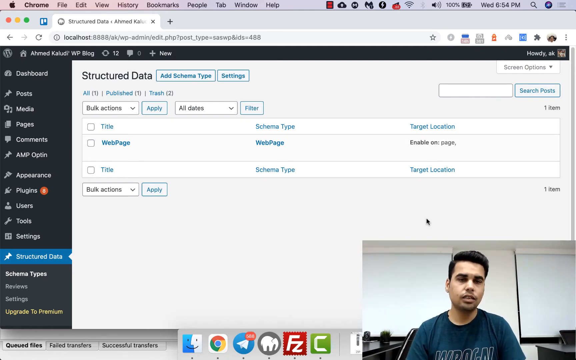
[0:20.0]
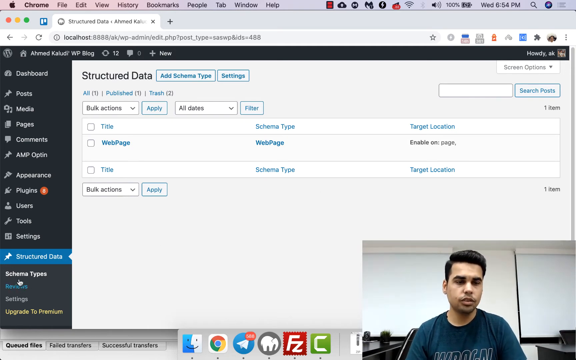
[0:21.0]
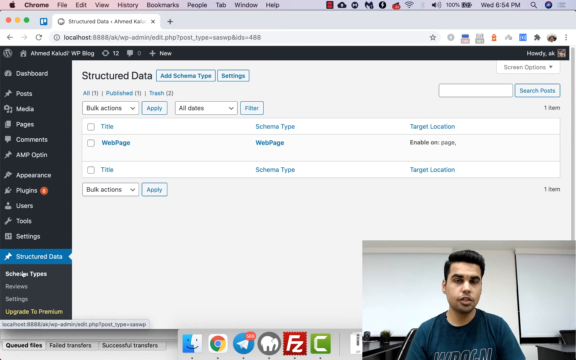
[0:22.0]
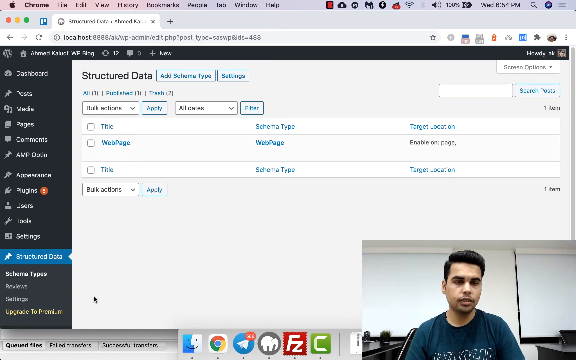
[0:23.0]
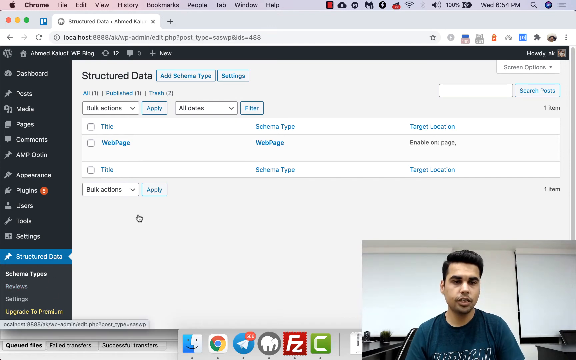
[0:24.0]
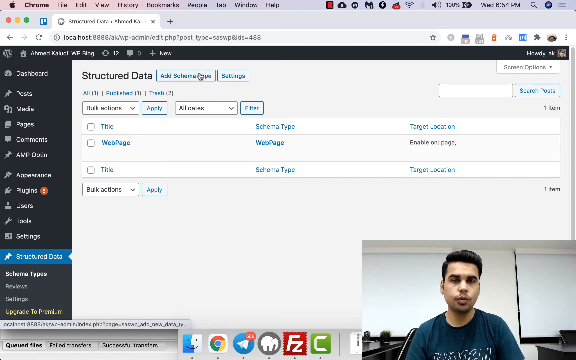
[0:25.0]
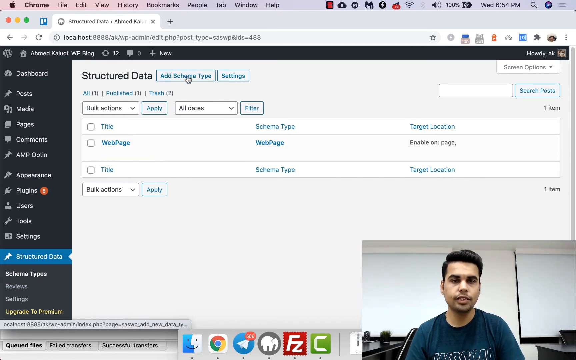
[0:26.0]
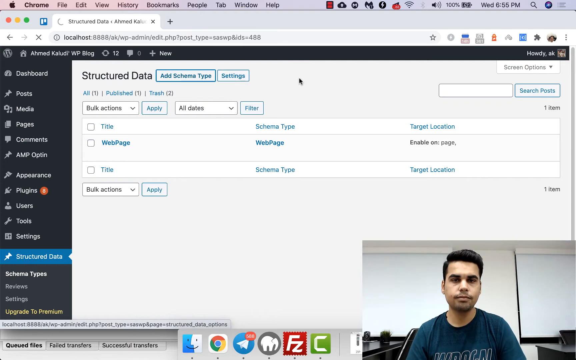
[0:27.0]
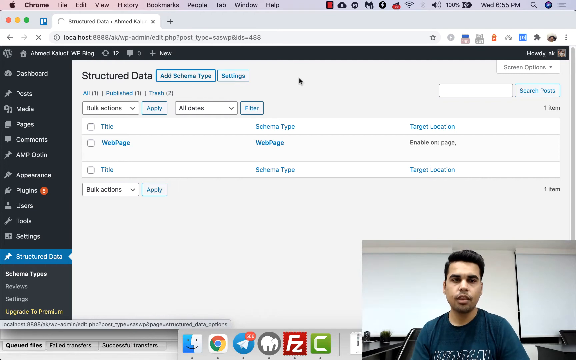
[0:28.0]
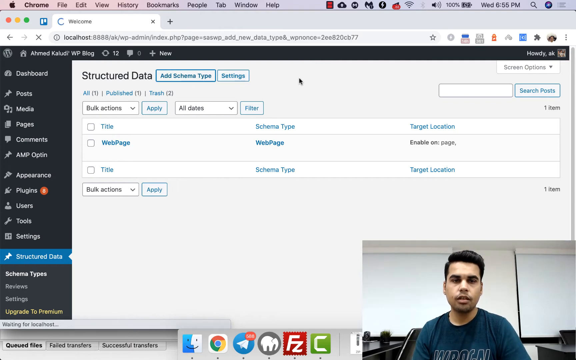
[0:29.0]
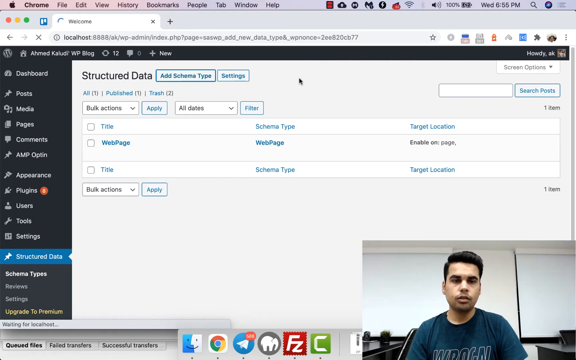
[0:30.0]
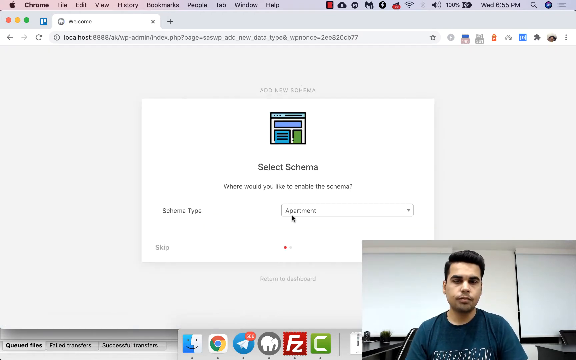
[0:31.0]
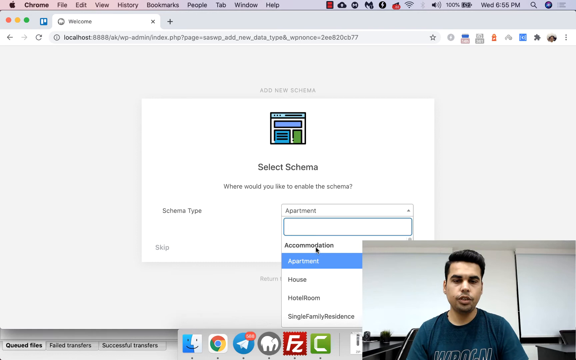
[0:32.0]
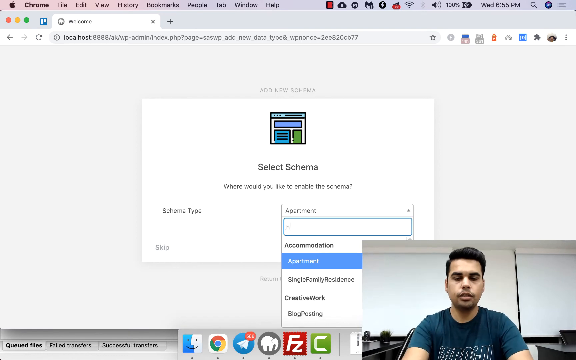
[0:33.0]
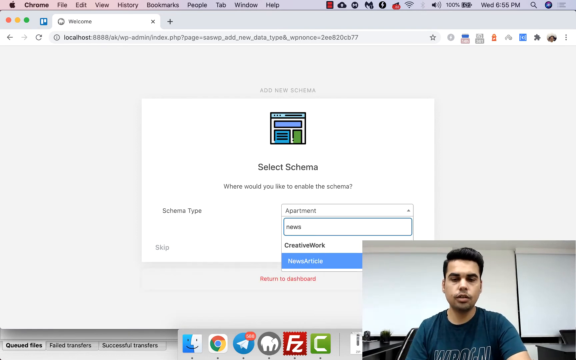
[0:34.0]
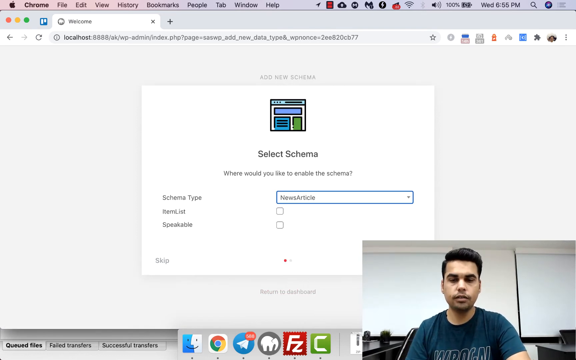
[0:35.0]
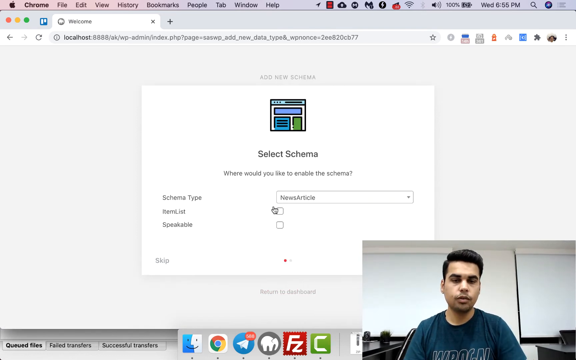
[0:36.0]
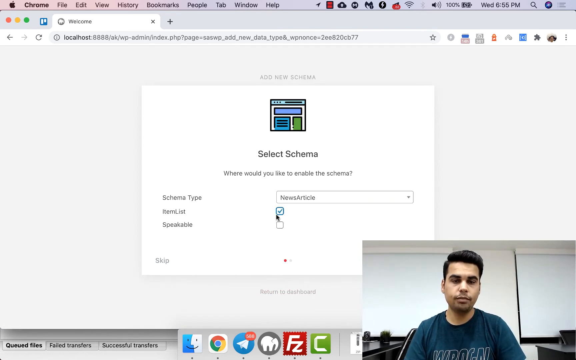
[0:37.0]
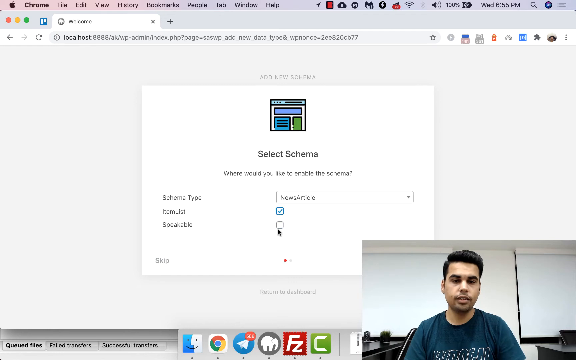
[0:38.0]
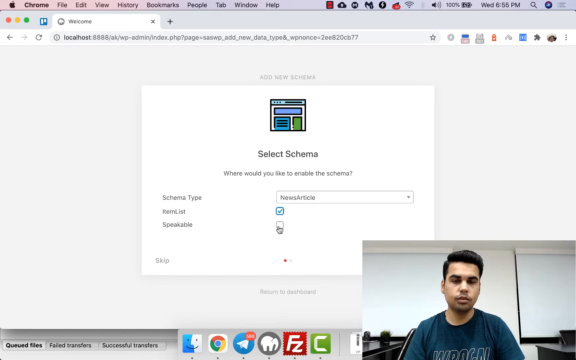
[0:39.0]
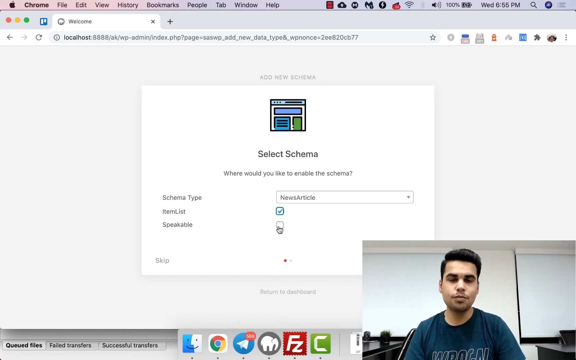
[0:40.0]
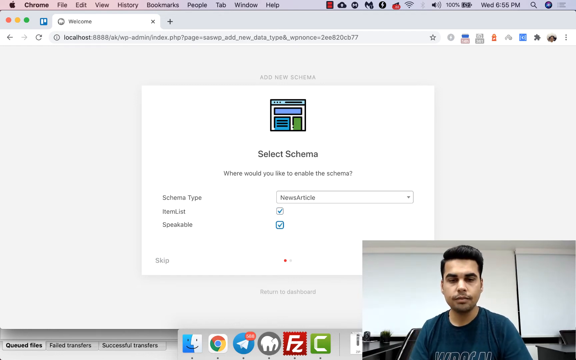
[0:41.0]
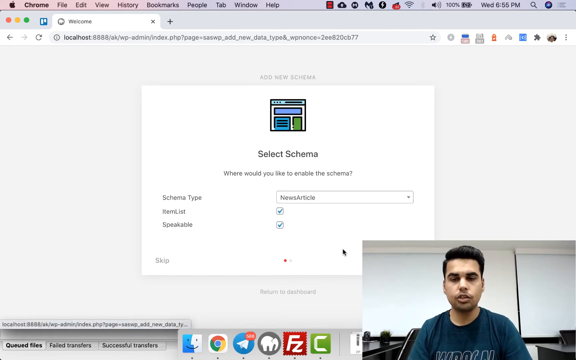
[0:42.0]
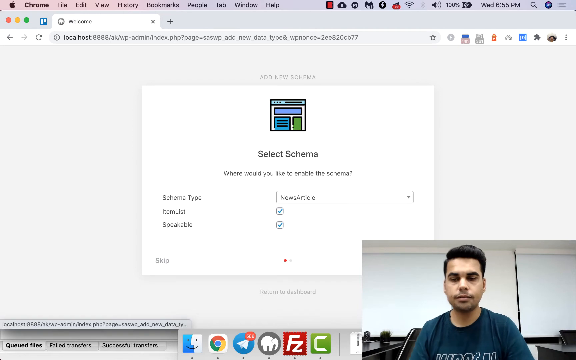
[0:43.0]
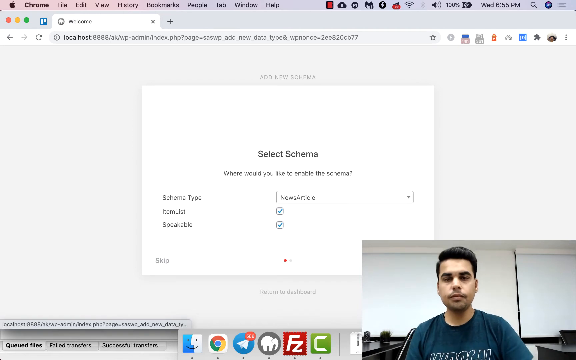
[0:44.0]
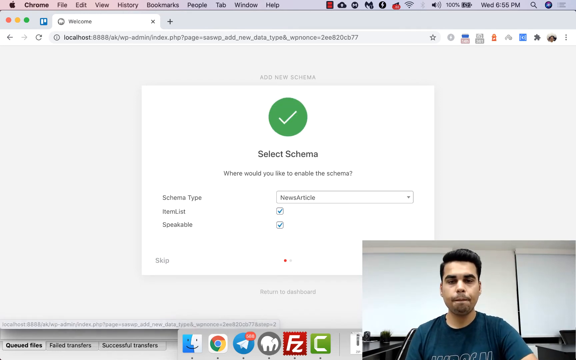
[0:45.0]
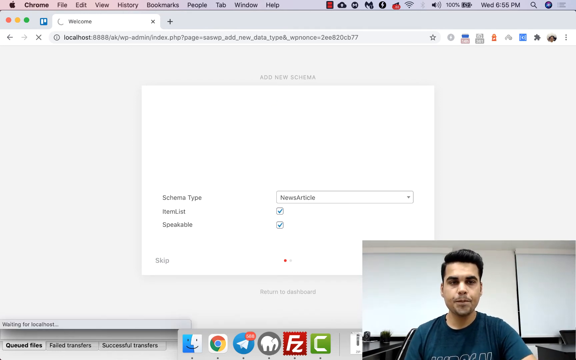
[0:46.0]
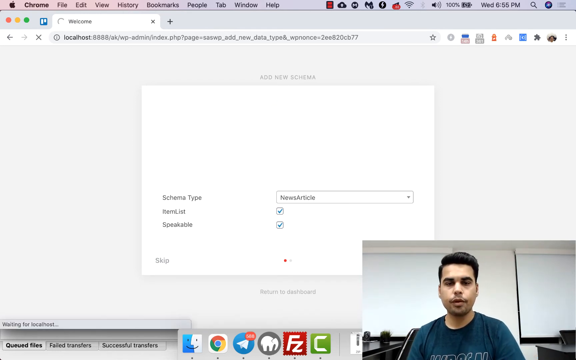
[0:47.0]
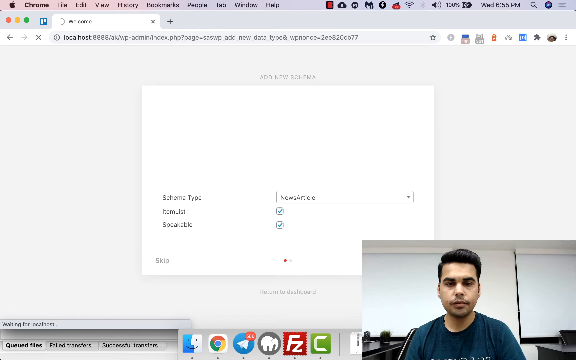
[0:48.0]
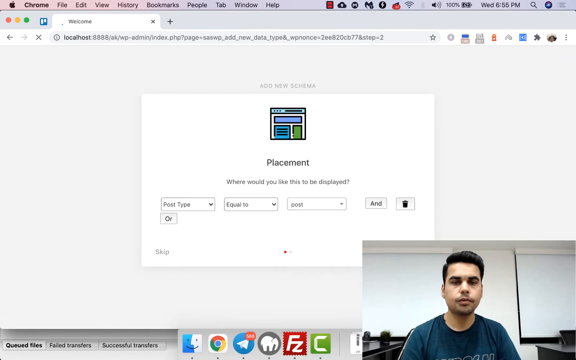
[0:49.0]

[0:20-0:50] The cursor moves down to the navigation bar on the bottom left, which lists Schema Types, Reviews, Settings, and Upgrade to Premium. He clicks the Add Schema Type button at the top, next to which is a Settings button. A new page appears for adding a new schema. The schema type is set by default to Apartment, and he changes it to News Article. Checklist items then appear for item list and Speakable; he selects both and goes to the next page, where feedback with a tick mark appears. Next, the placement page is shown, where one can pick where the schema should be displayed. It shows post type, equal to, post, and apparently an and/or operator can be changed. There is a bin, and options to skip or go next.